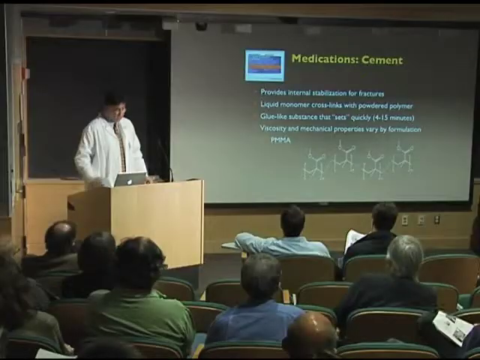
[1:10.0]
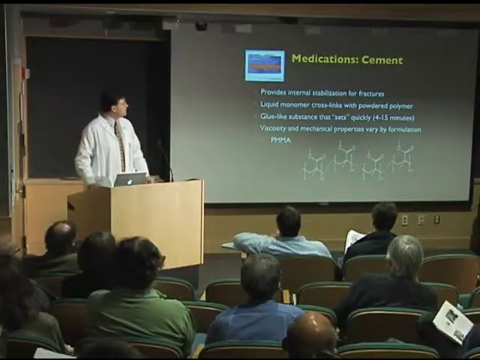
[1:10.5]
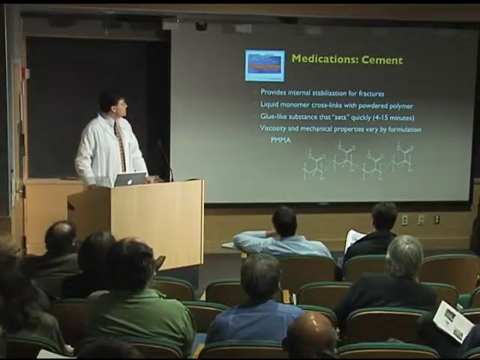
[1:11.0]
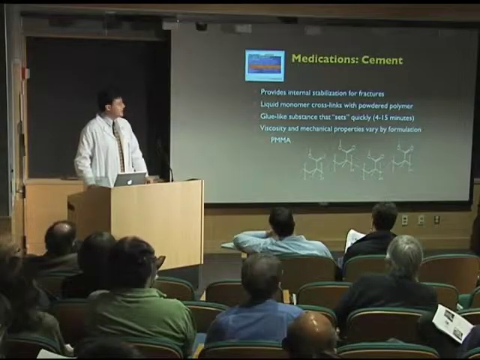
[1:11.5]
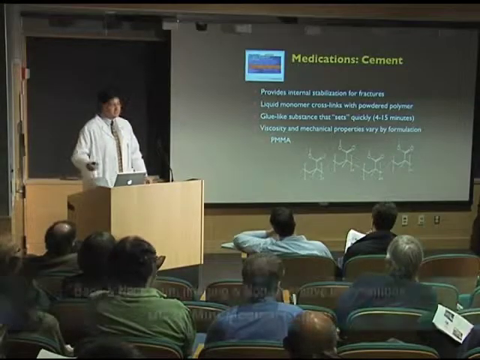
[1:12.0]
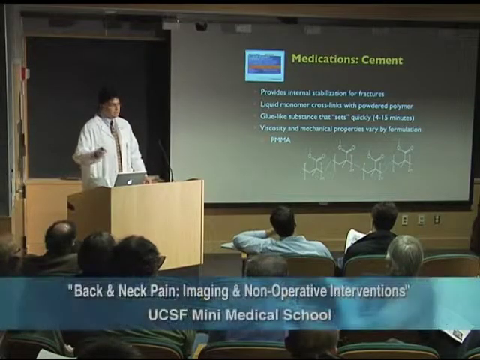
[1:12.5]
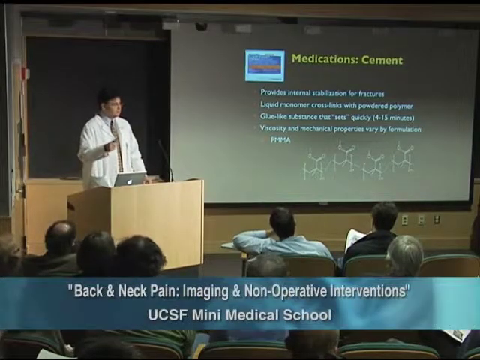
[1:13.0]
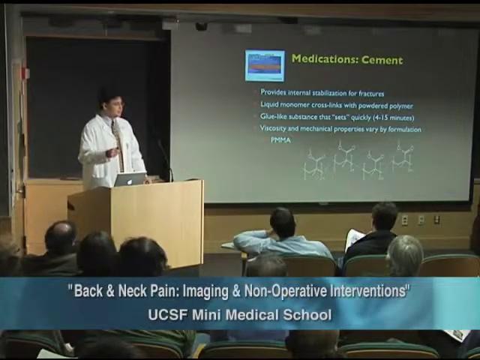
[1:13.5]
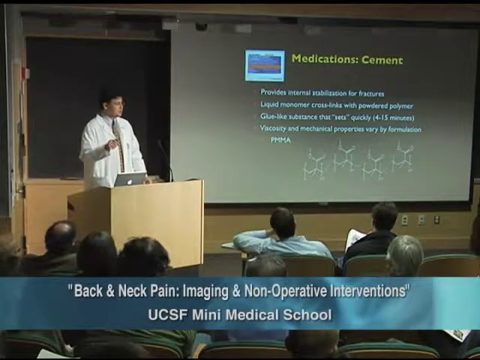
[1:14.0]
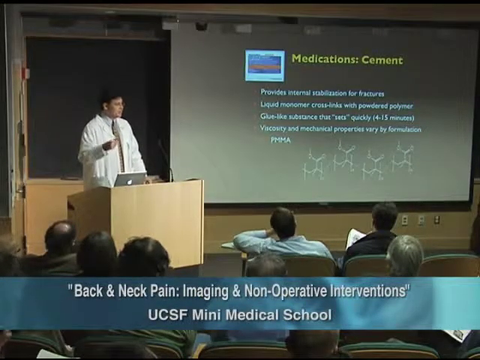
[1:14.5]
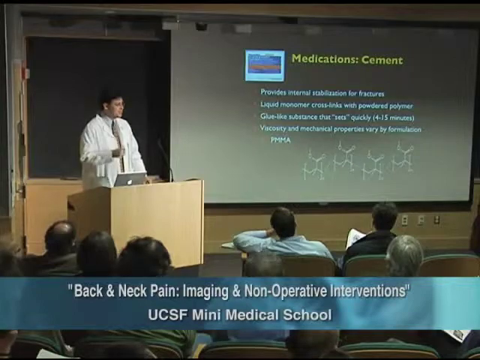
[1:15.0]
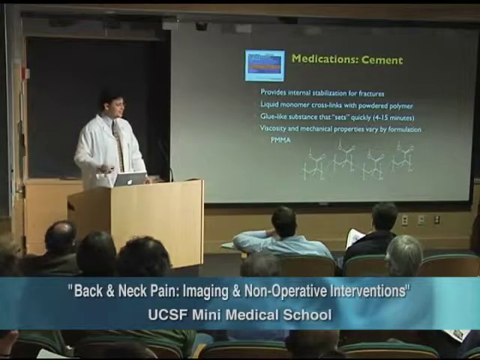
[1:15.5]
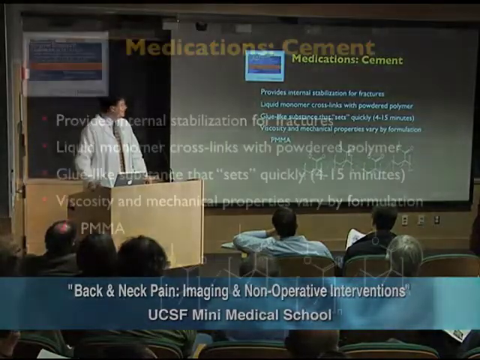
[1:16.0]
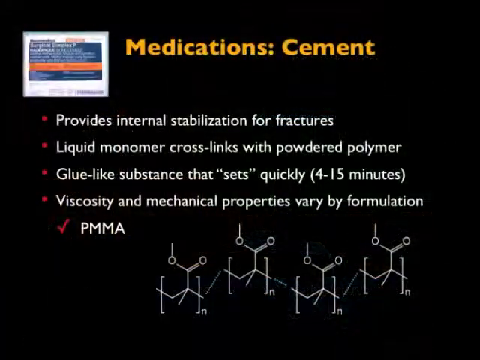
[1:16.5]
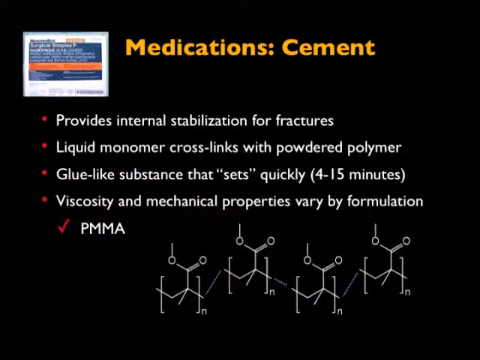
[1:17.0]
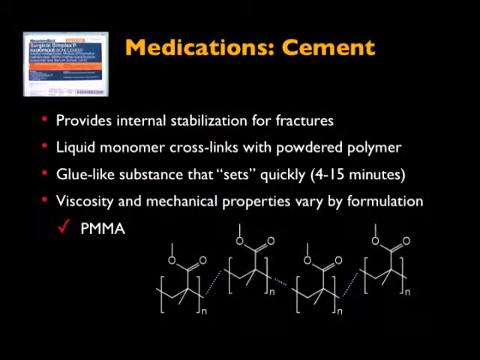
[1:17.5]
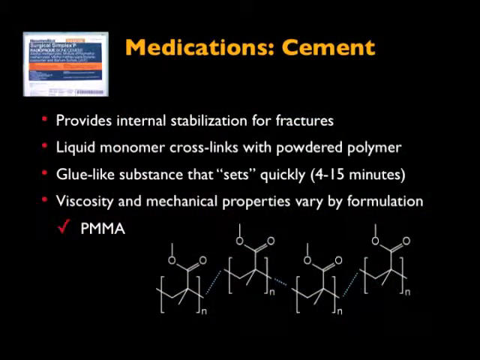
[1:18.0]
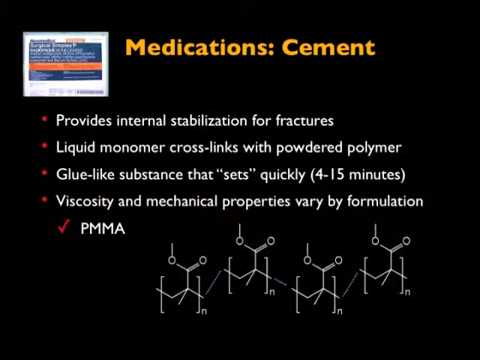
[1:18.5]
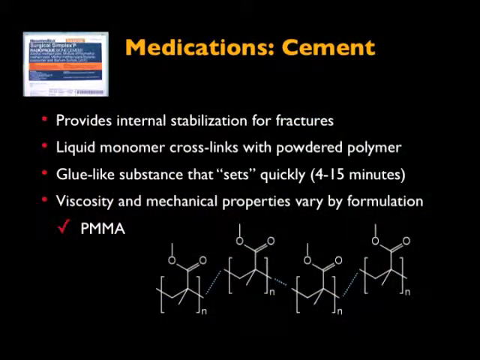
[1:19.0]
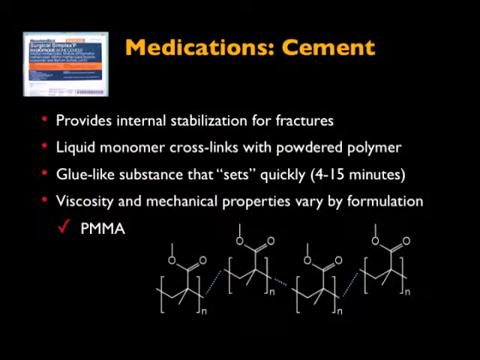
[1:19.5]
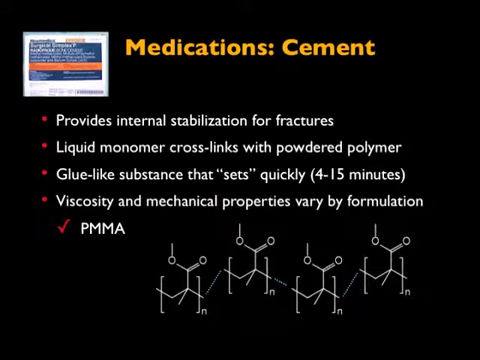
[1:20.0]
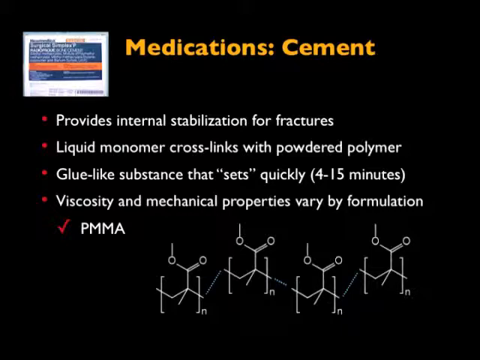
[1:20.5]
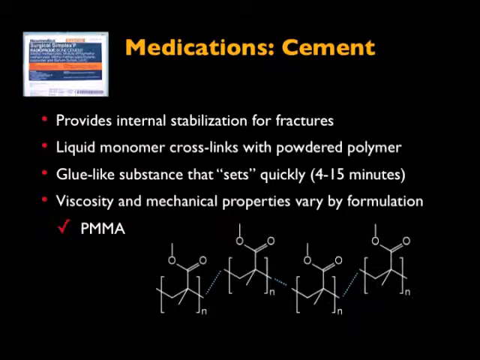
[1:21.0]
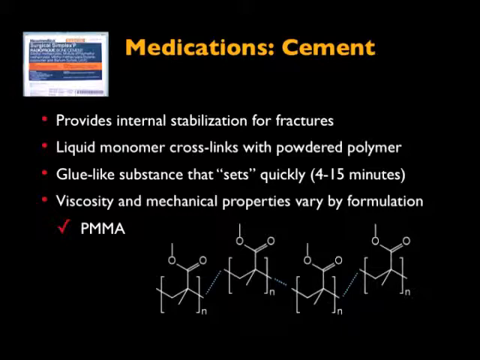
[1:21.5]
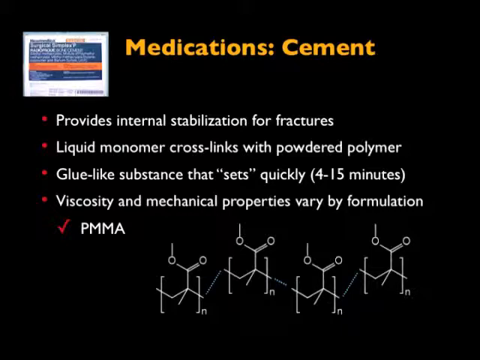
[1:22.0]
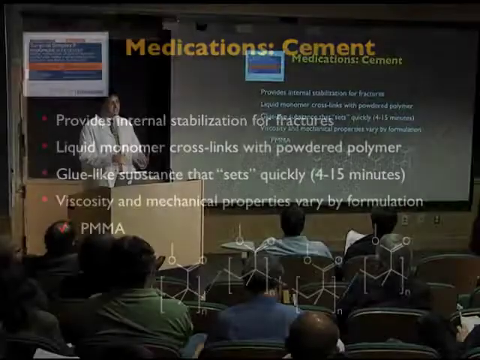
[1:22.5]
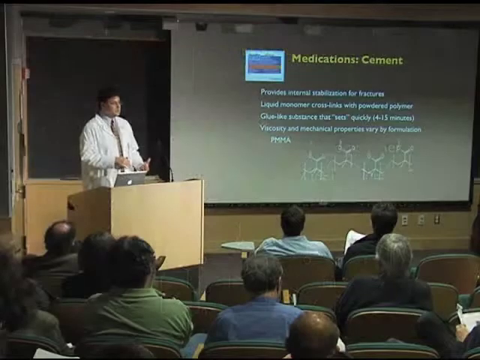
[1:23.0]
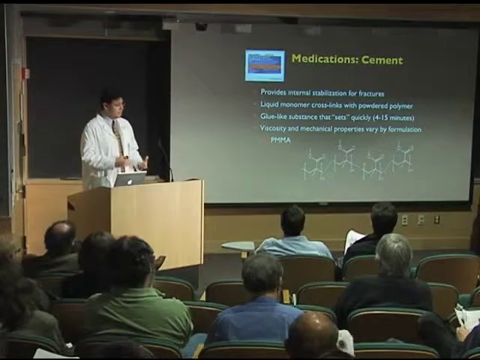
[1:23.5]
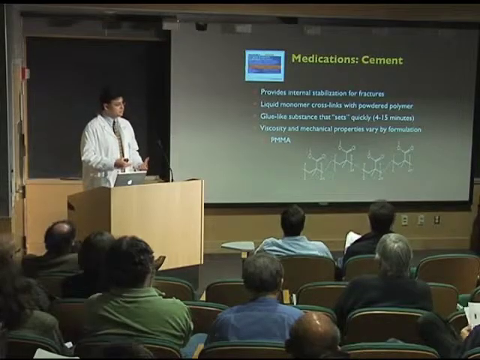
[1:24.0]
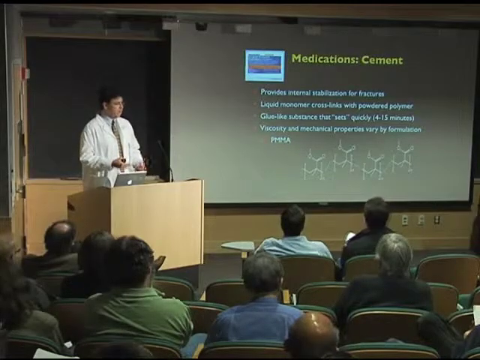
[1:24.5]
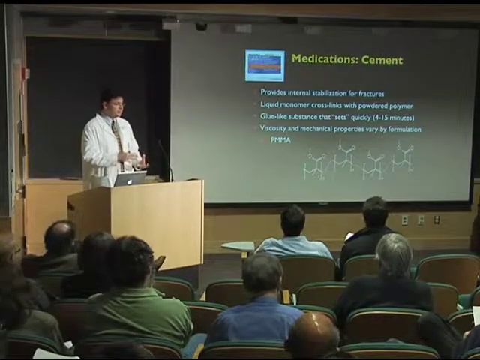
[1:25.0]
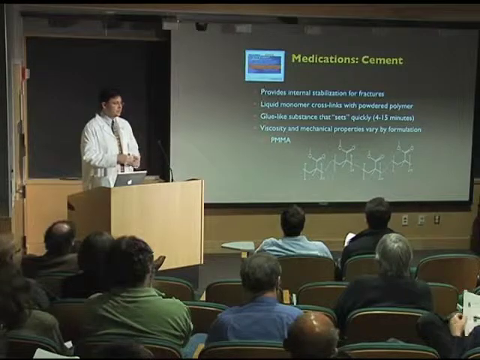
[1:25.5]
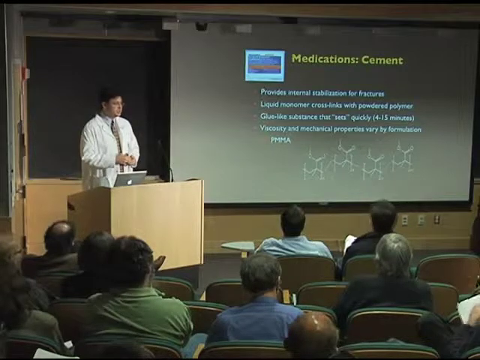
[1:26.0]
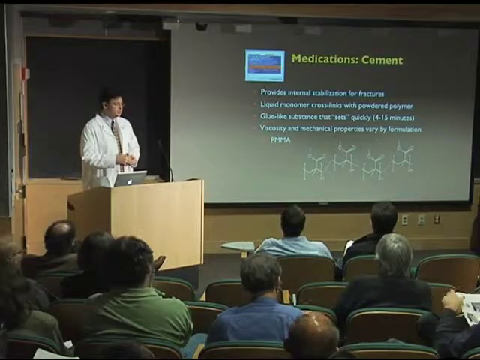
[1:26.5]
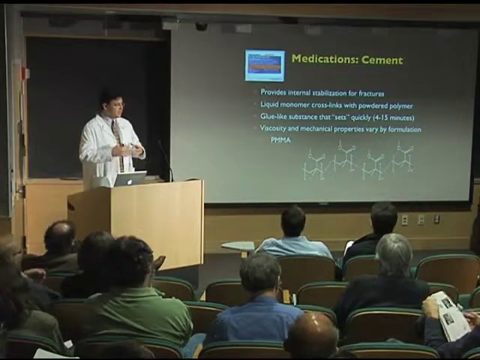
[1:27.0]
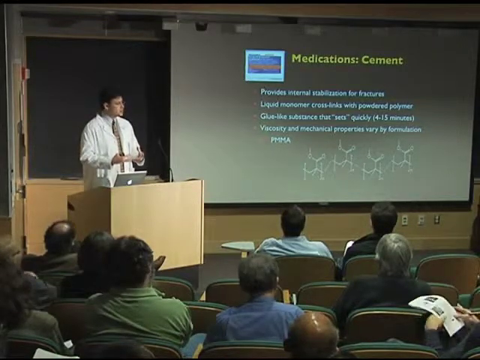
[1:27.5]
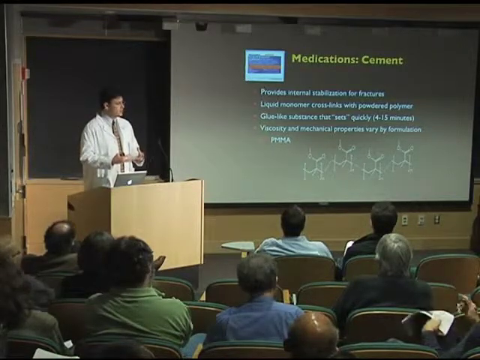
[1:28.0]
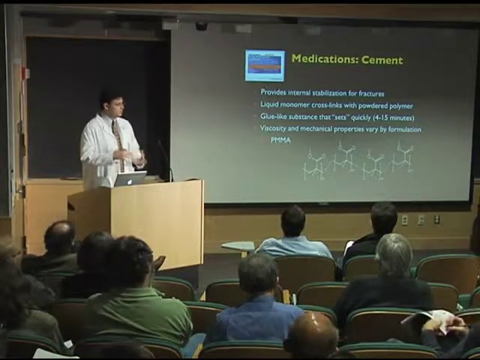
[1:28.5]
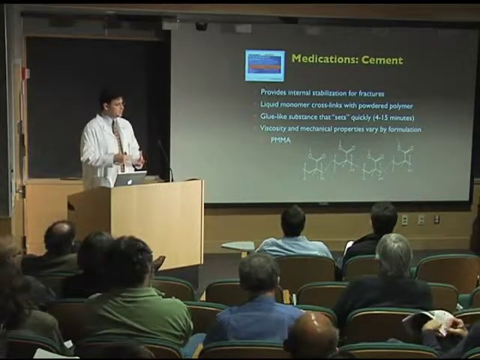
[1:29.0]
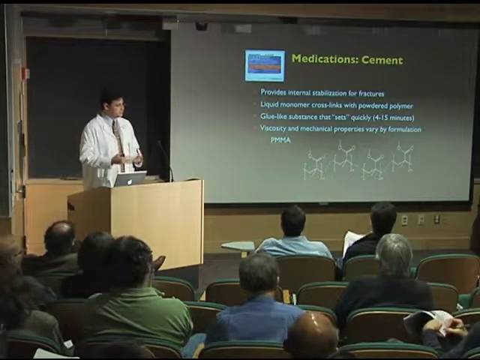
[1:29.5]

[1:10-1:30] The slides are shown to be part of the presentation that everyone can see, and the doctor holds a remote in his right hand, even though it looked like his left. After a few seconds the audience appears, seen from the backs of their heads. The view zooms in on the current slide, which has an orange-yellow title at the top reading "medication cement." In white it reads "provides internal stabilization for fractures," "liquid monomer cross links with powder polymer," "glue-like substance that sets quickly," "four to fifteen minutes," "viscosity and mechanical properties," and "PMMA." The video then returns to the man speaking. He uses his hands as he talks, and people are looking at him on the monitor.